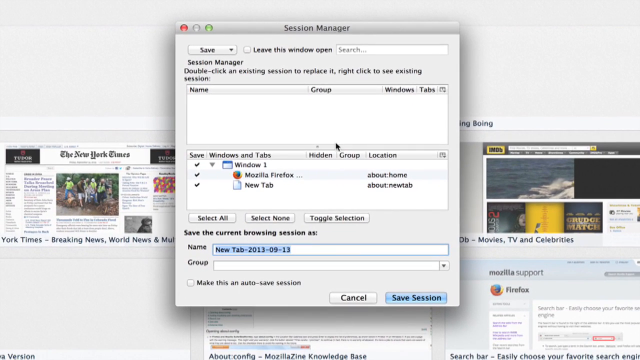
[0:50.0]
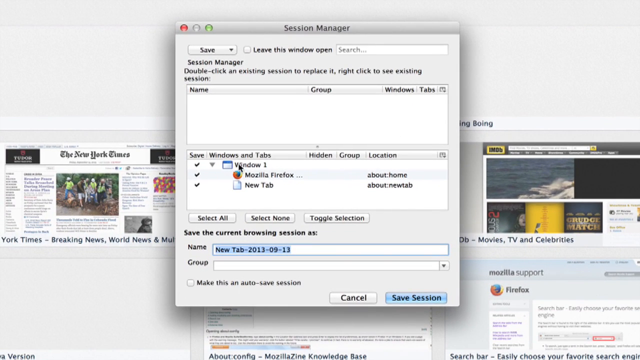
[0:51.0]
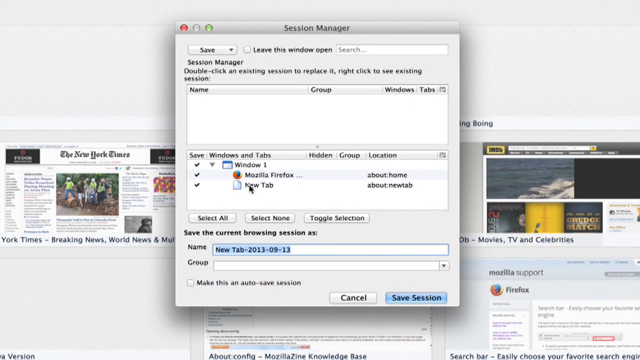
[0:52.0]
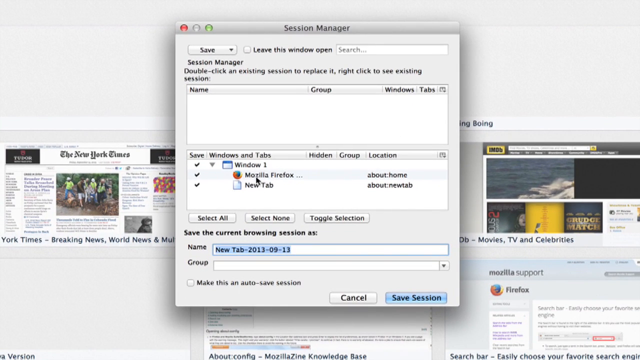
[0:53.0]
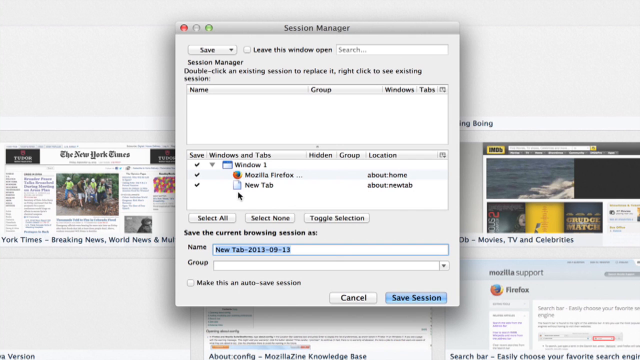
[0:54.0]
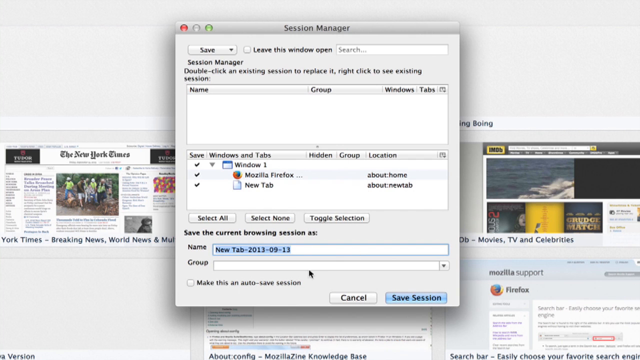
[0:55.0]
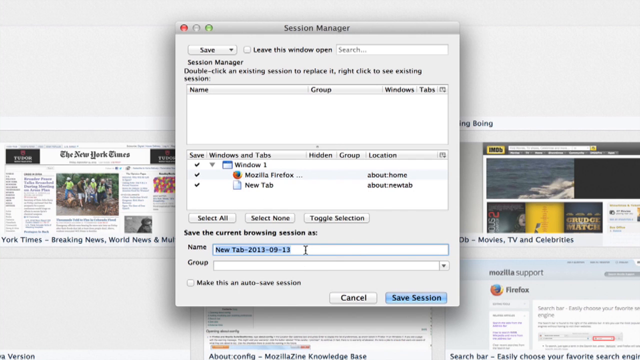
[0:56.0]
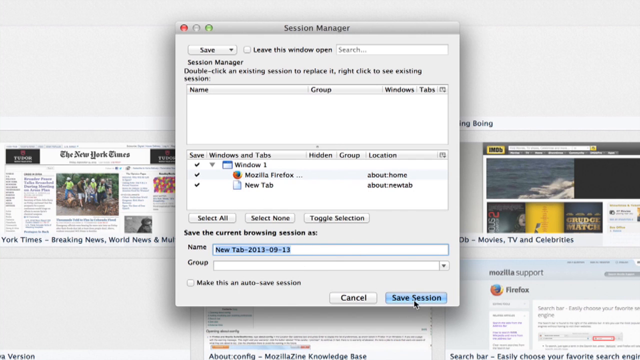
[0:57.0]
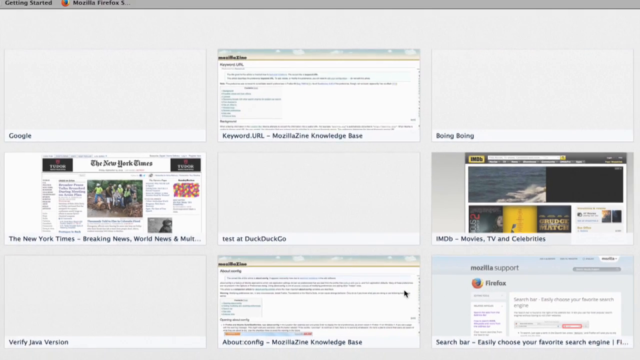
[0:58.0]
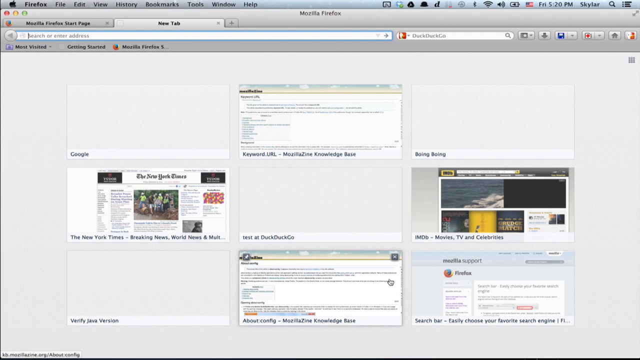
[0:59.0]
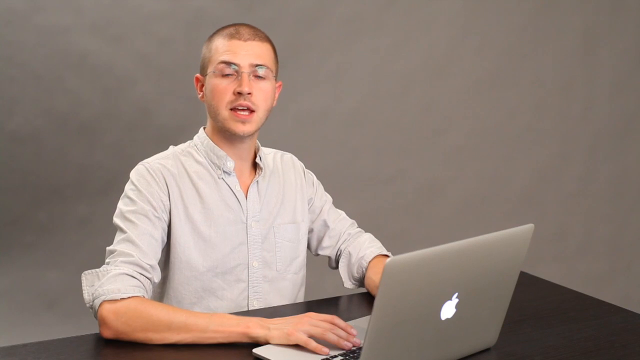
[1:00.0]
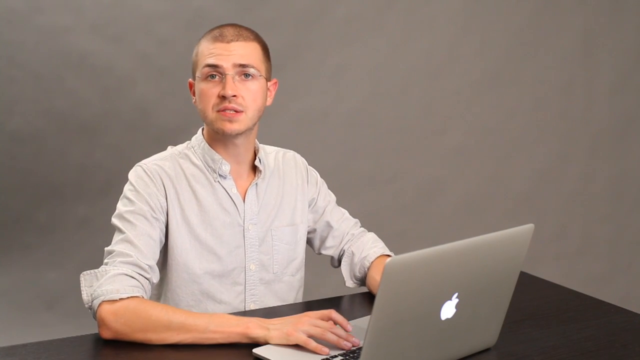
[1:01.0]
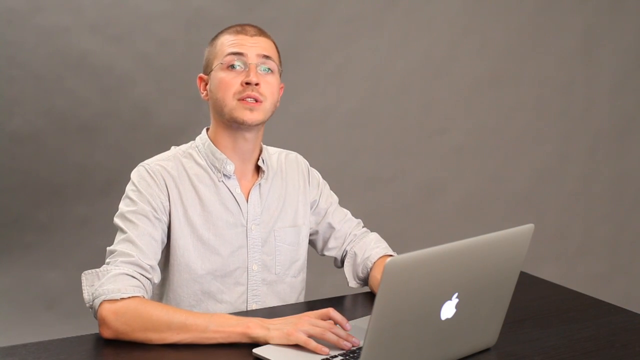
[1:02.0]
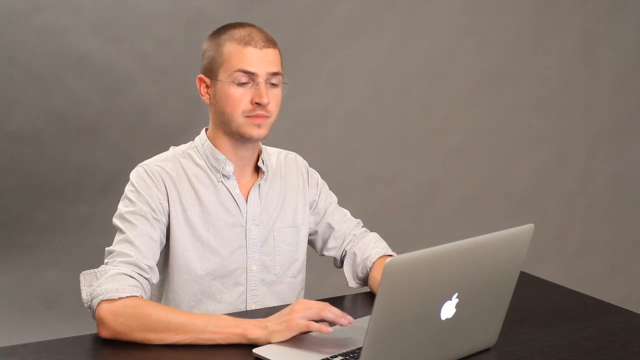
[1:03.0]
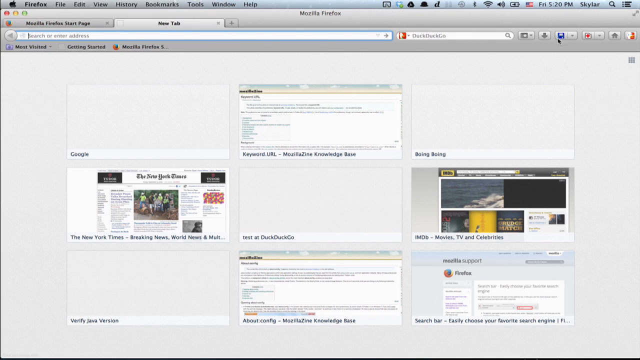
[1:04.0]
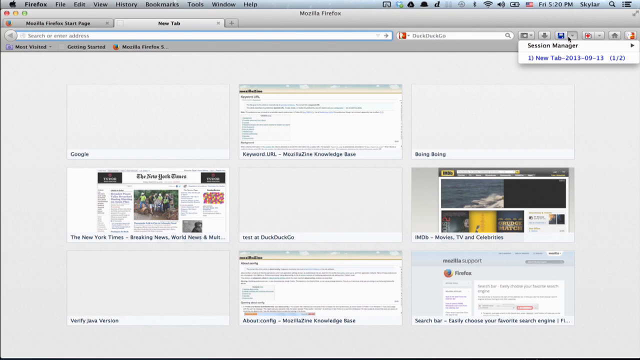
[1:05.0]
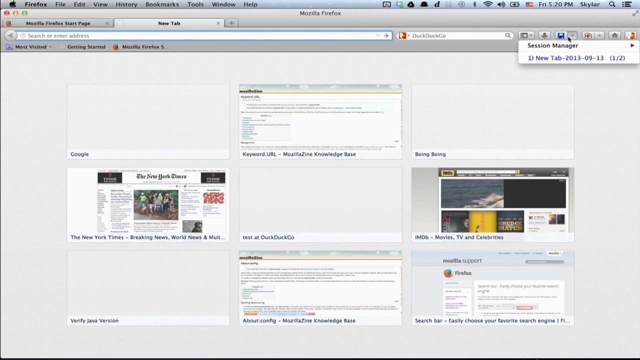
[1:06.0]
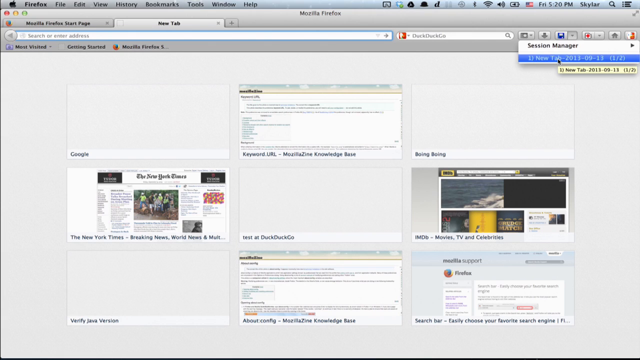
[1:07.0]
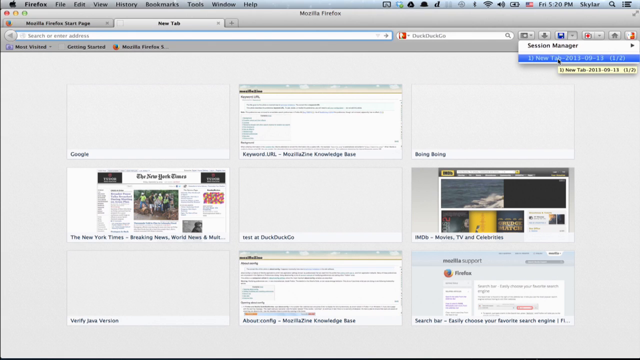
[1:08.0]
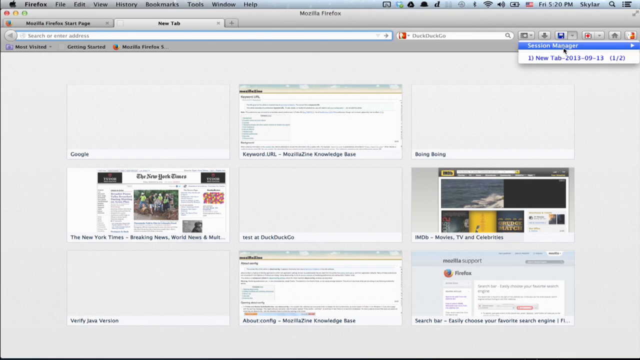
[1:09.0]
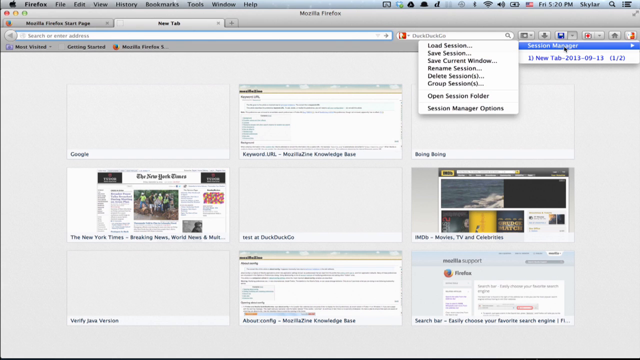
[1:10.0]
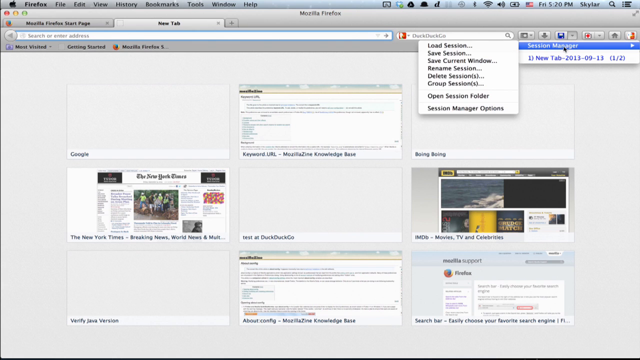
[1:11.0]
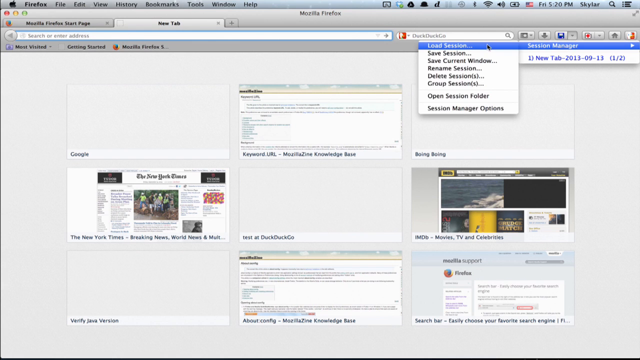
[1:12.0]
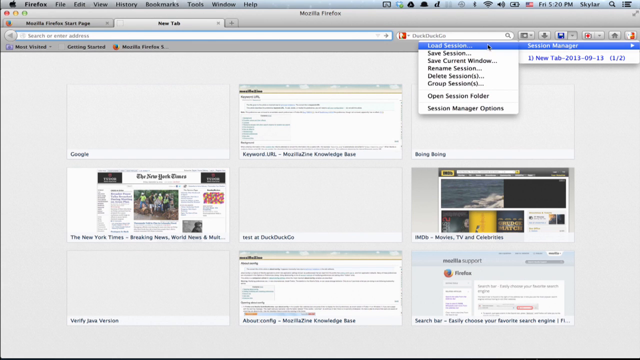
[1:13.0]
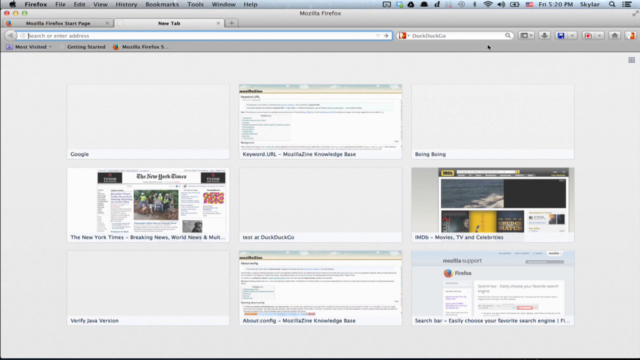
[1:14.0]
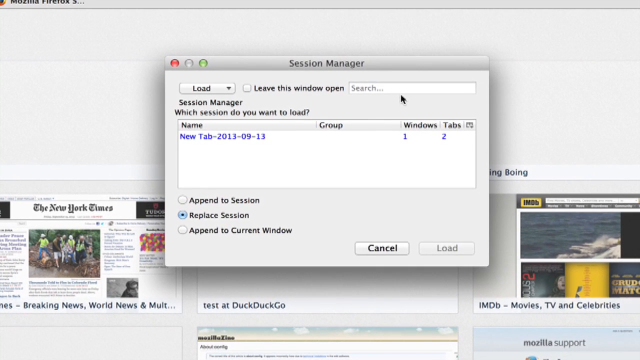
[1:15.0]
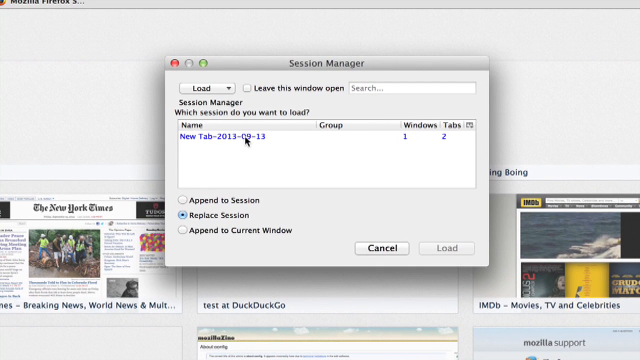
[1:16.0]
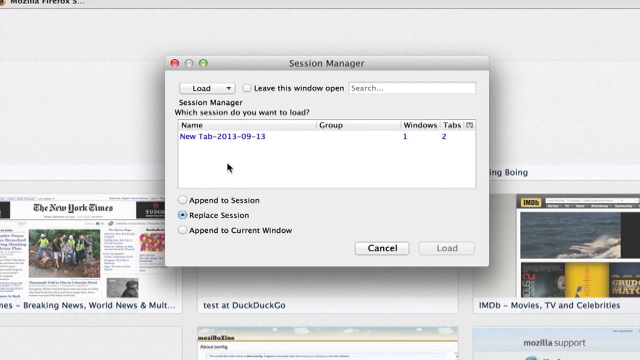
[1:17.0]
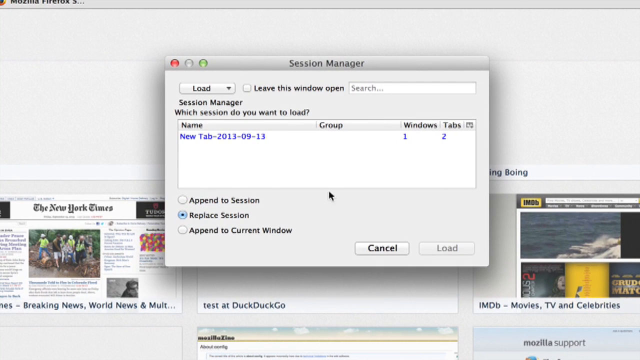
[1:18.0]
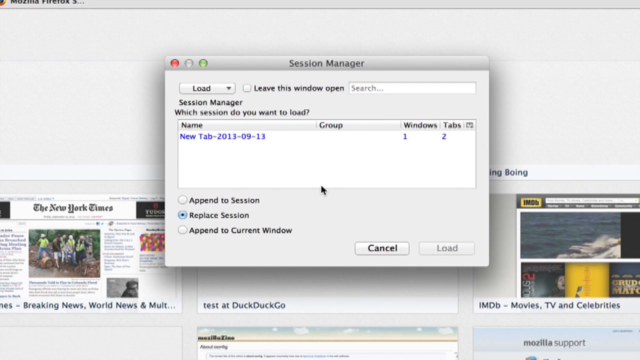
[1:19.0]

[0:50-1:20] The panel of open windows shows one window, called Window 1, containing Mozilla Firefox Home and a new tab. There is an option to save the current browsing session and rename it; the name field is automatically populated with a new tab and the date. The cursor hovers over the open tabs and then over the pre-populated name field. At the bottom right of the dialog are two buttons, "Cancel" and "Save Session" in blue, and the user clicks Save Session. The shot zooms out to reveal the whole screen. Next, the same man from the beginning continues speaking to the camera, nodding slightly, with his hand still on the laptop keyboard. He looks back down at his laptop and the screen recording resumes: the cursor returns to the floppy disk icon but clicks its drop-down option instead. The options include Session Manager with a right arrow at the end, and below it the saved browsing session with the name from before, showing "1 out of 2." The cursor hovers over it, then back over Session Manager with the right arrow, revealing a drop-down menu. The user clicks Load Session, which opens the Session Manager dialog with a few options, asking which session to load. The only option is the session just saved, and the choices are append to session, replace session, or append to current window, with replace session as the default.